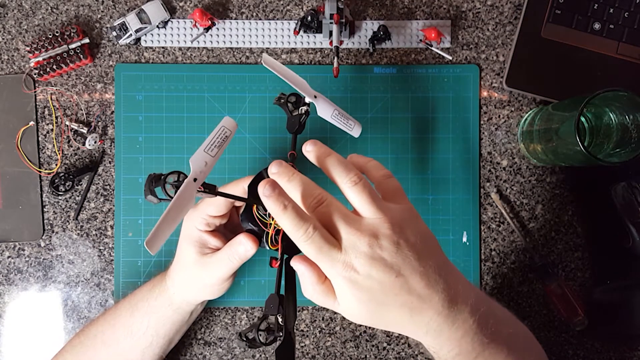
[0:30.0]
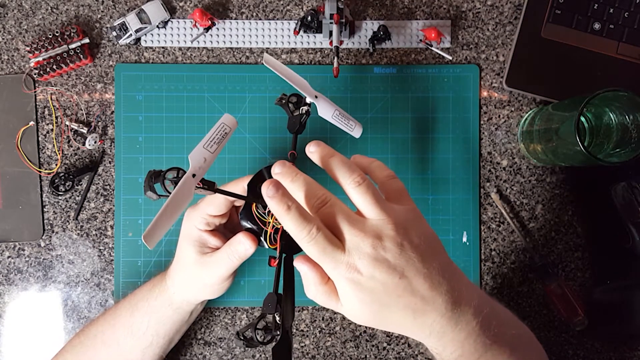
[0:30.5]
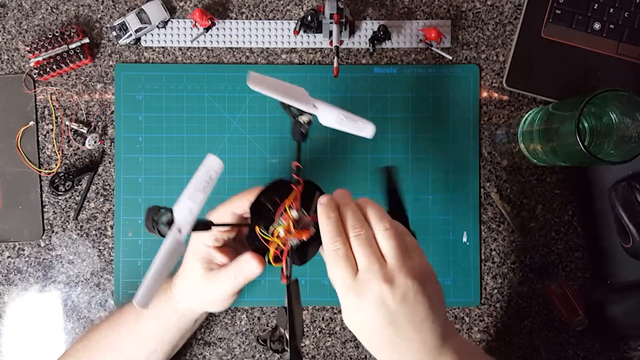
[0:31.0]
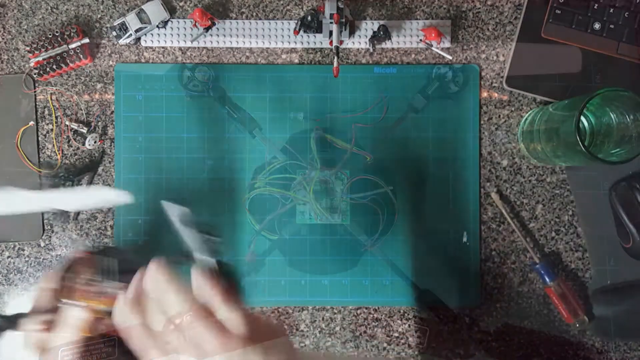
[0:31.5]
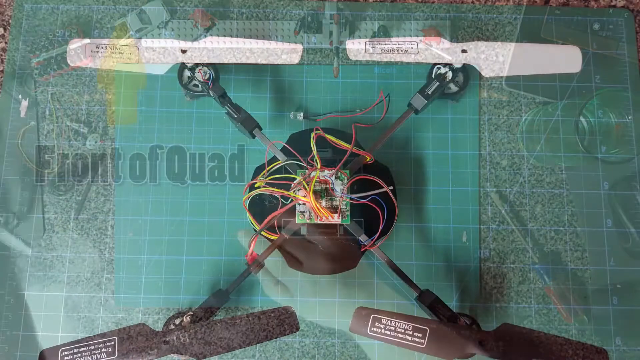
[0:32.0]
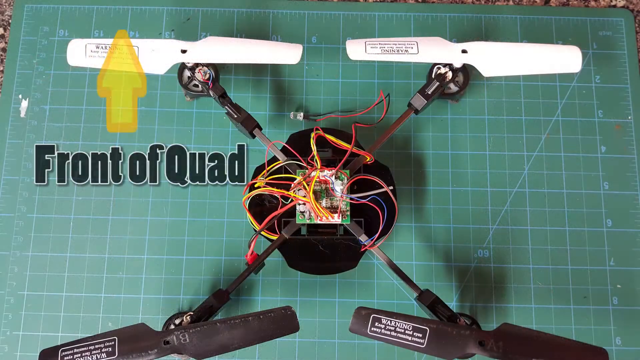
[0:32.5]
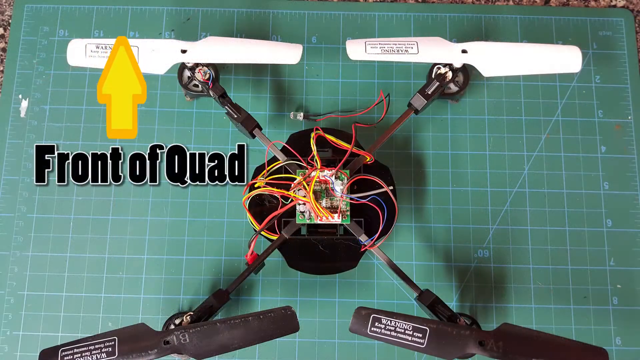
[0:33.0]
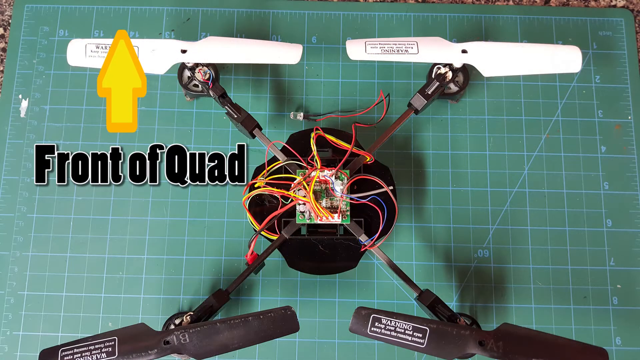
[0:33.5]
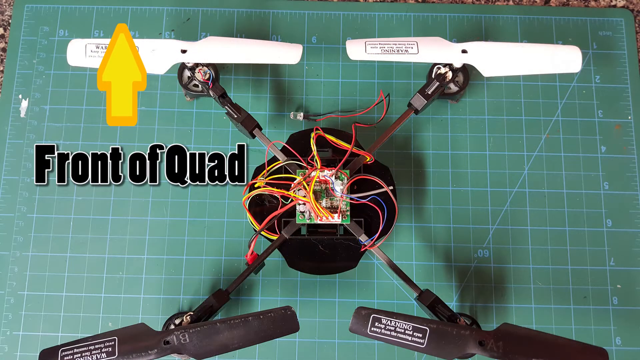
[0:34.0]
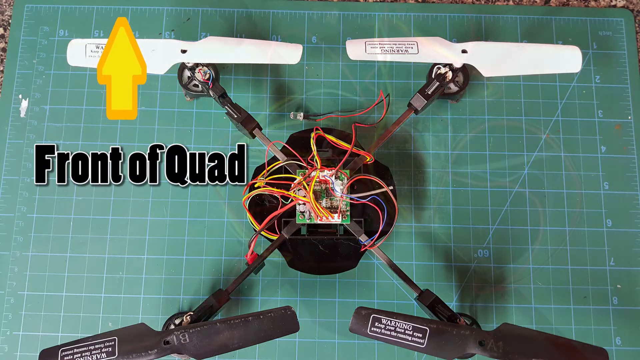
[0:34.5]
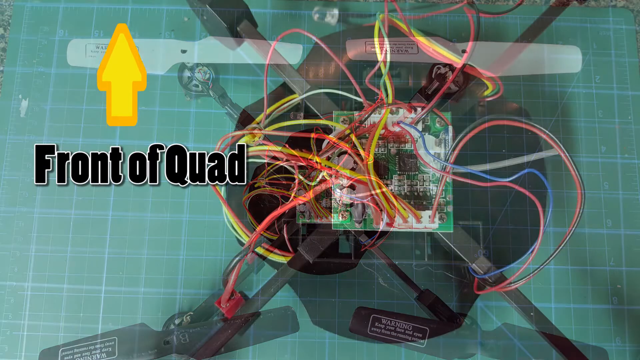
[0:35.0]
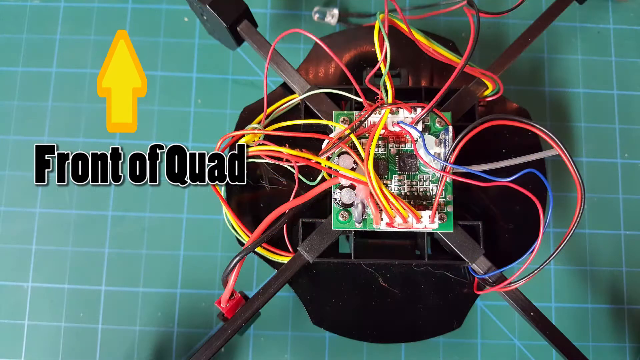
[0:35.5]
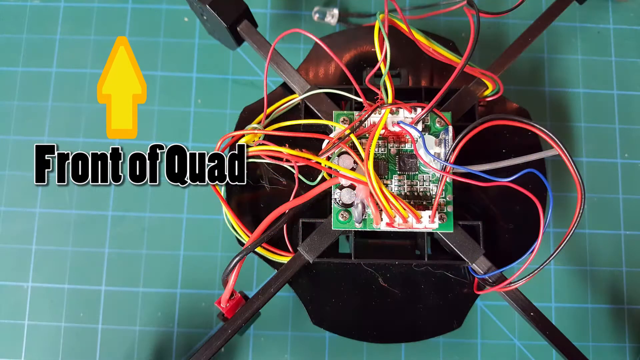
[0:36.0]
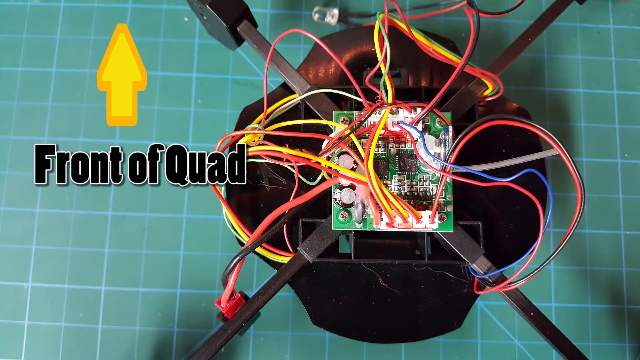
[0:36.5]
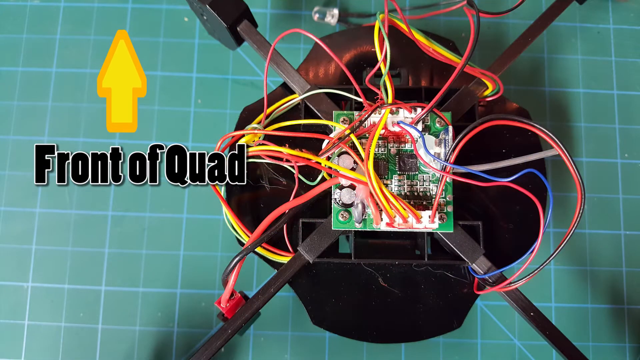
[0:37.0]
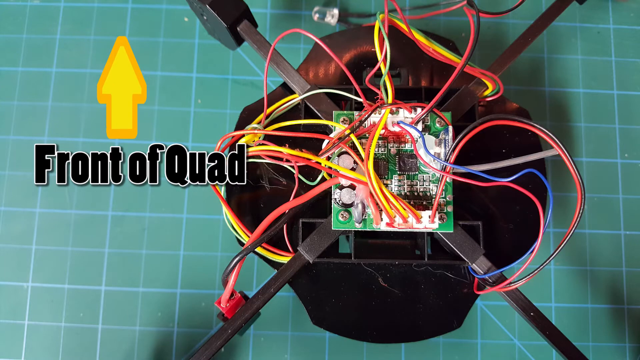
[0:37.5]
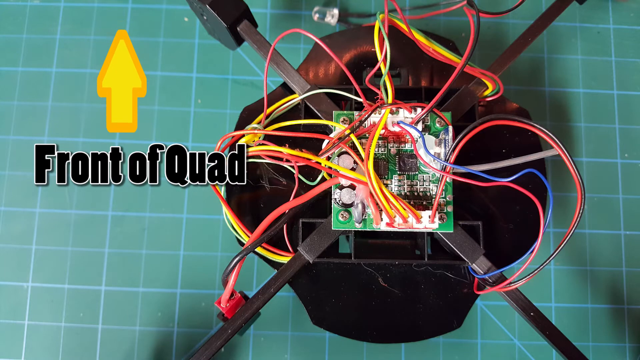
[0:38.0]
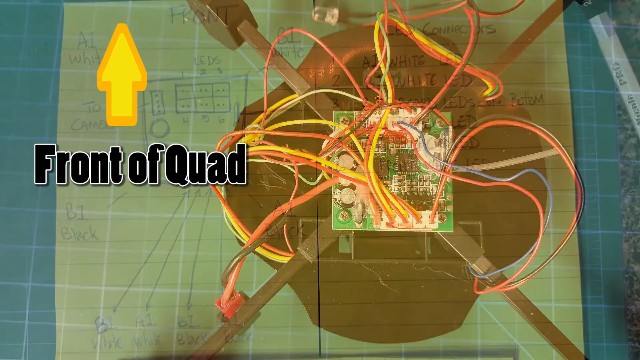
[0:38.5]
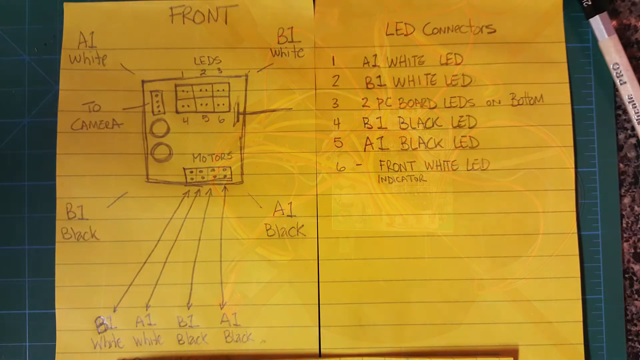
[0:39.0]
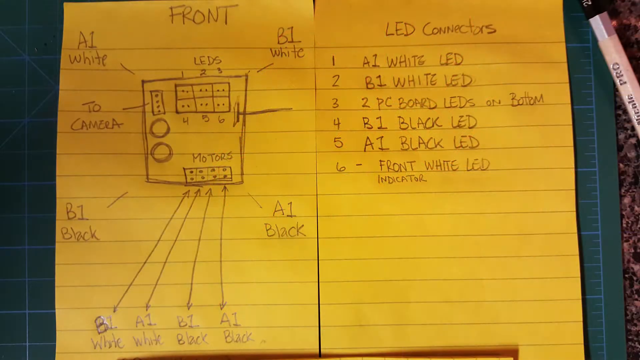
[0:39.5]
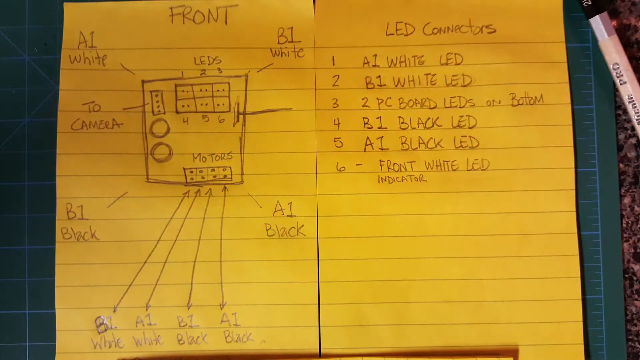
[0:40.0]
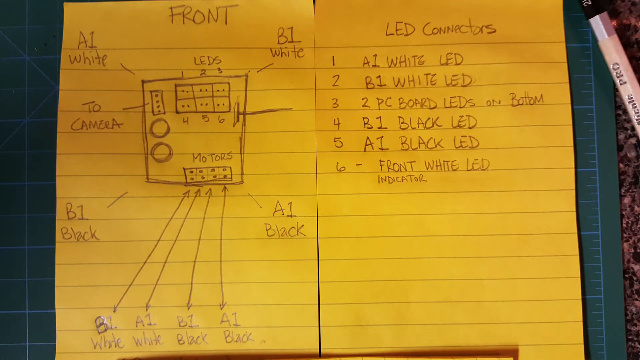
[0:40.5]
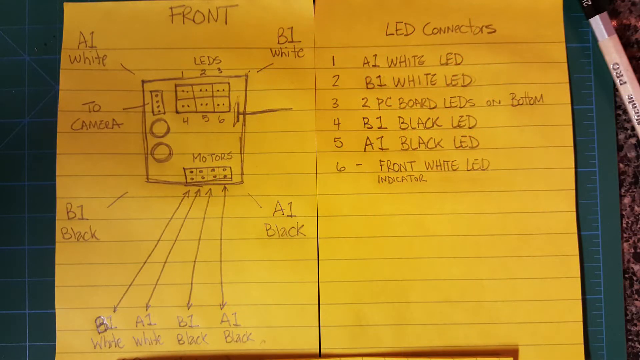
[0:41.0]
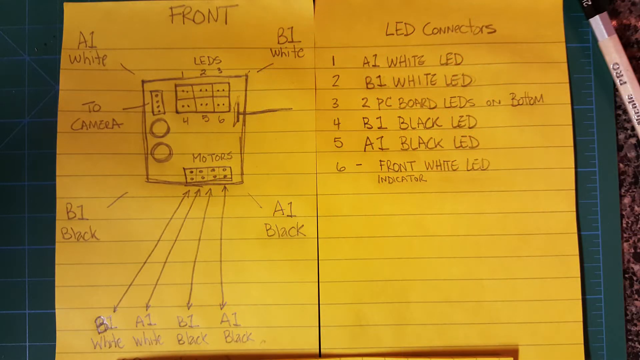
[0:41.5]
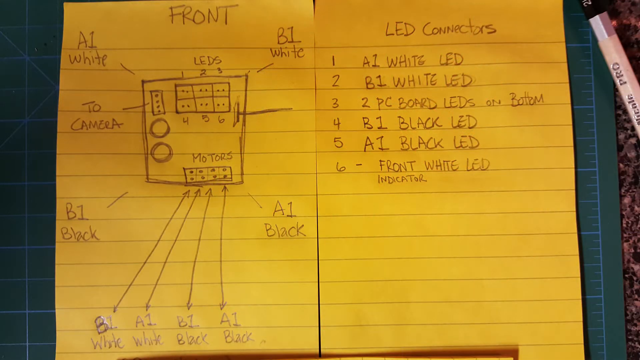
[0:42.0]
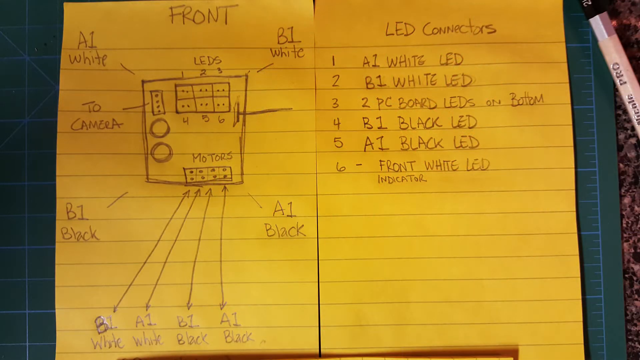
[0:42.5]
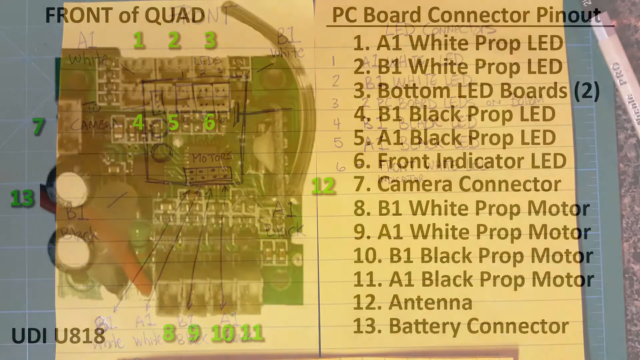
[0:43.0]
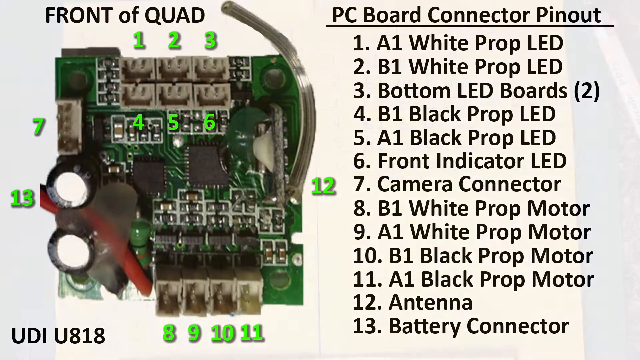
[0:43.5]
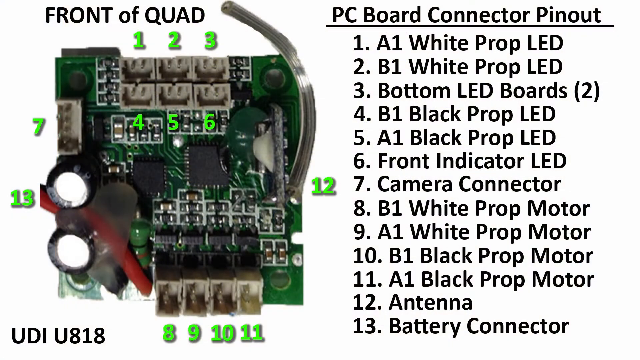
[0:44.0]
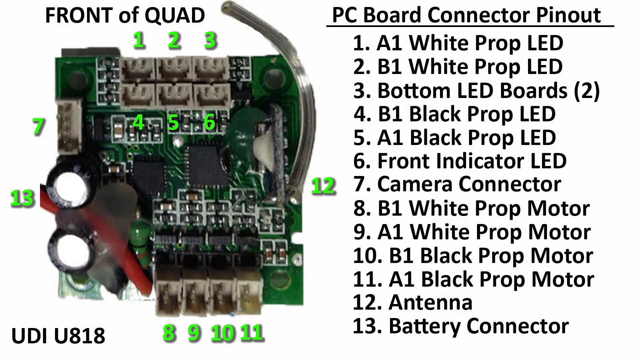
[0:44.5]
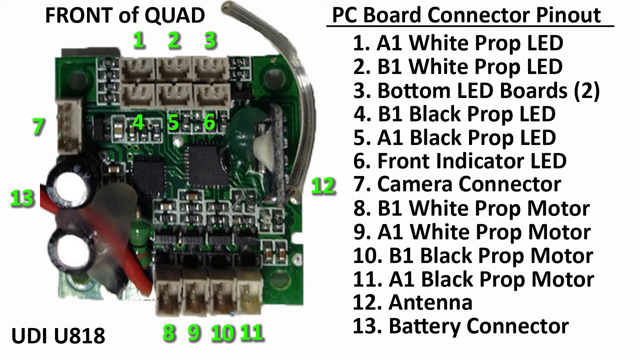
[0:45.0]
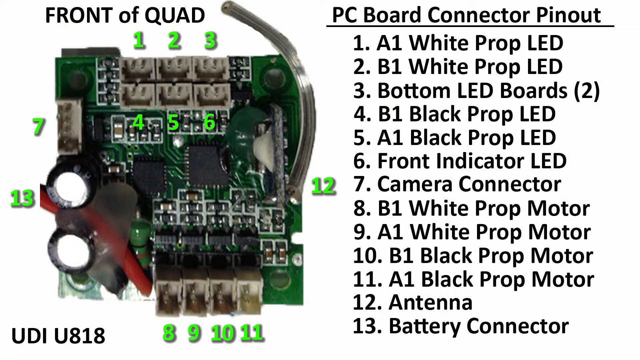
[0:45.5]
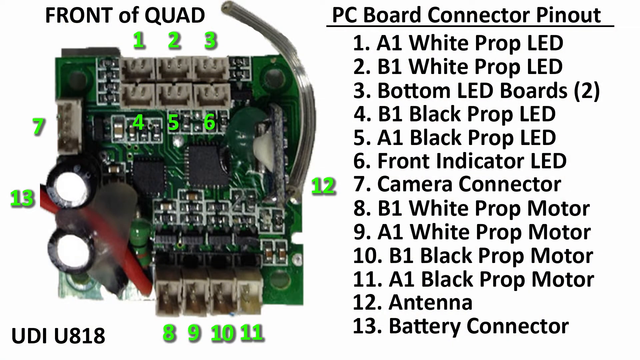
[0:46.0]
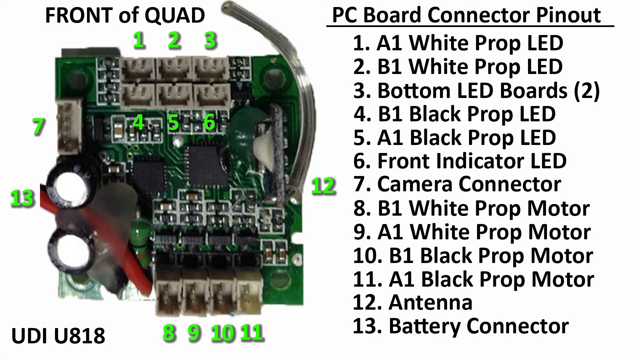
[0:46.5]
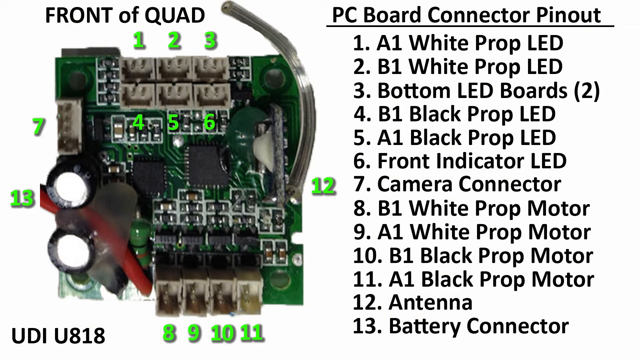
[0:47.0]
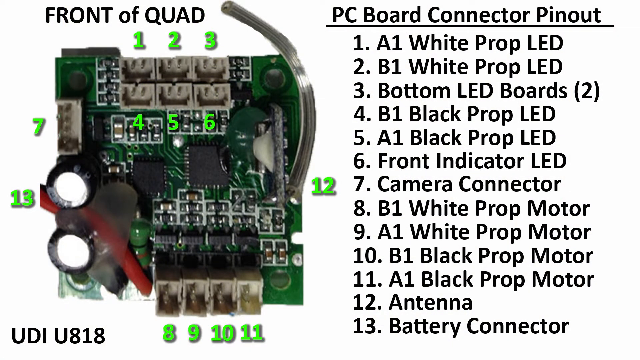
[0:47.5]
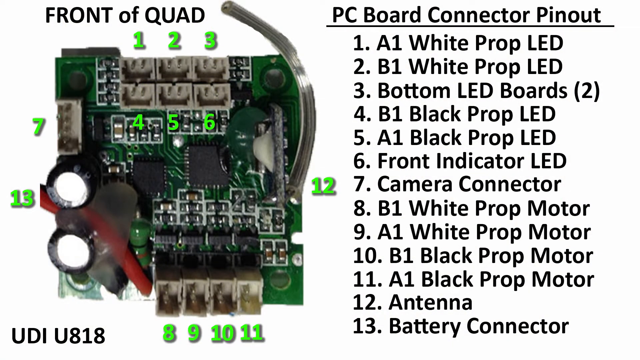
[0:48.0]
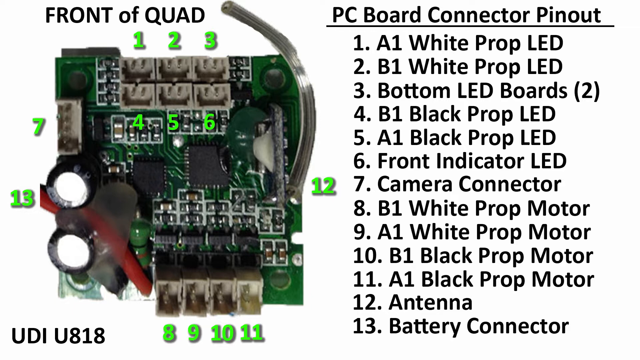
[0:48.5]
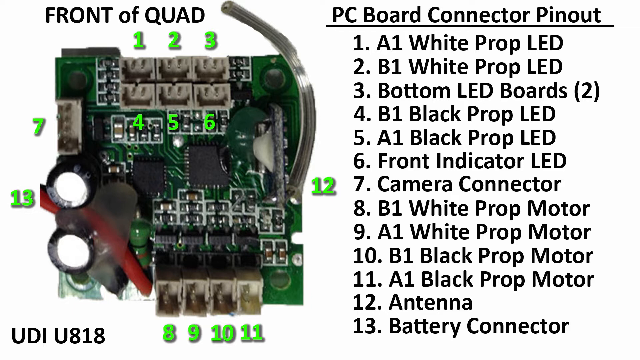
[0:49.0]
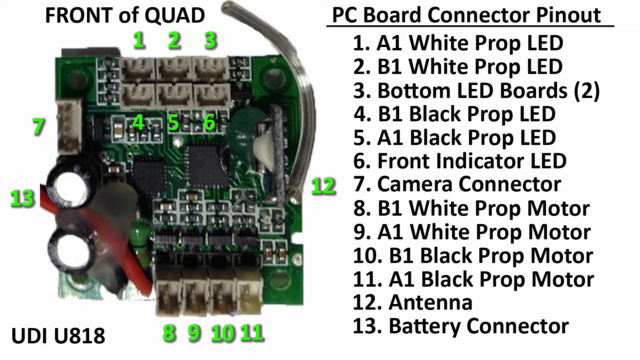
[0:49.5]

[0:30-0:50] Instructions show what the front of the quad should include. There are drawings, pictures and exposed wiring, seemingly as a step-by-step tutorial. The parts shown include a white LED, a black prop LED, a battery connector and an antenna, and a picture of the front of the quad is numbered from 1 to 15, showing all the parts to include. It appears to be a tutorial on connecting and building a working quad.